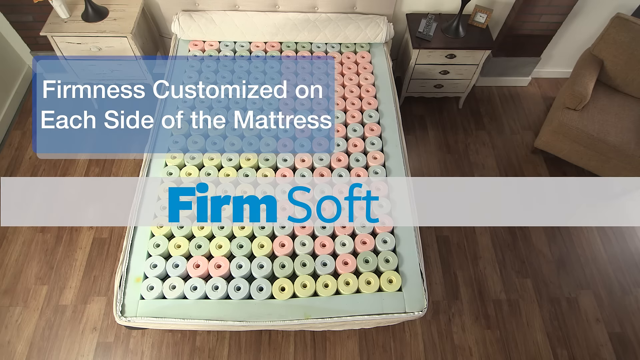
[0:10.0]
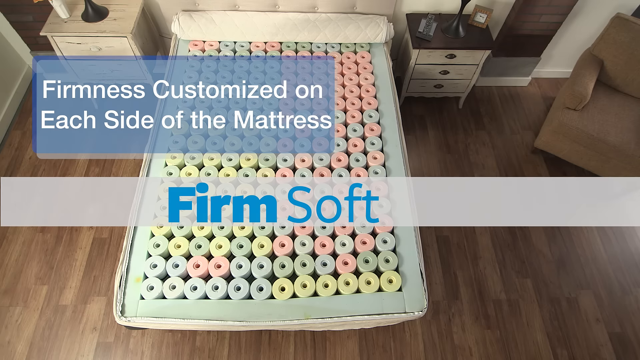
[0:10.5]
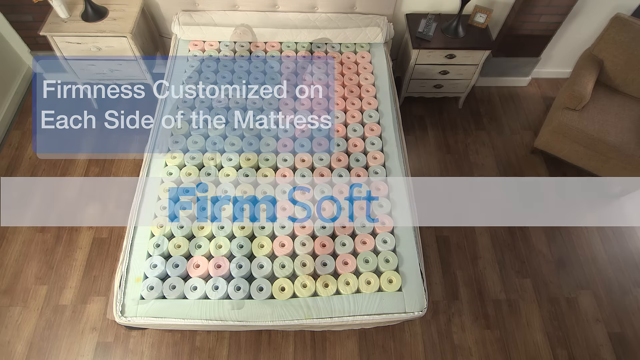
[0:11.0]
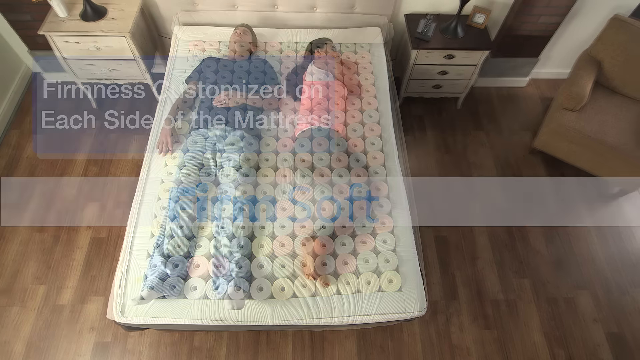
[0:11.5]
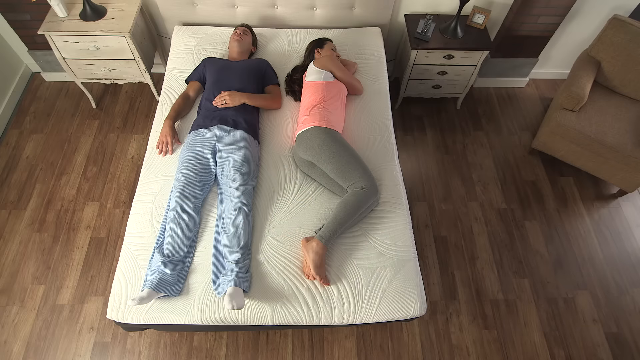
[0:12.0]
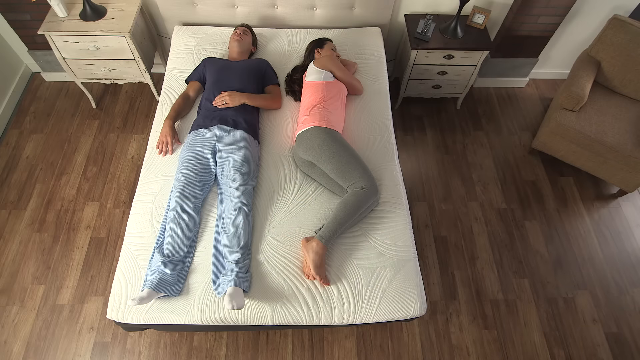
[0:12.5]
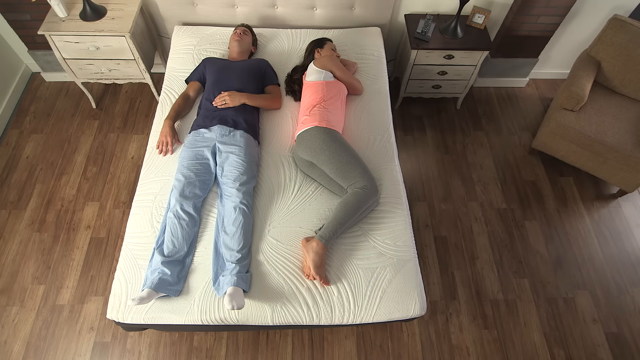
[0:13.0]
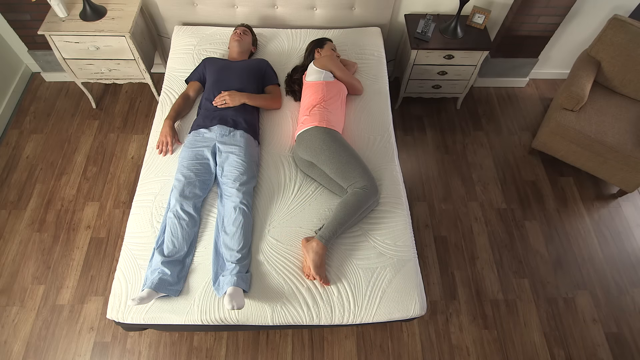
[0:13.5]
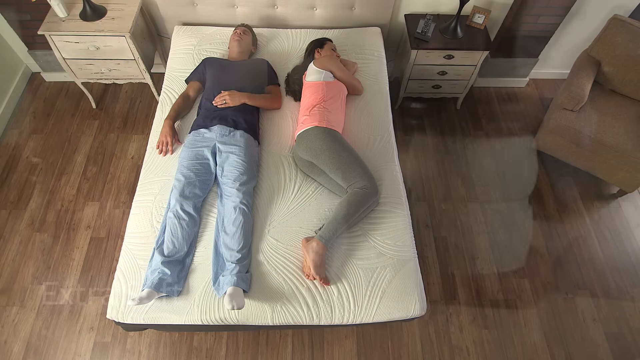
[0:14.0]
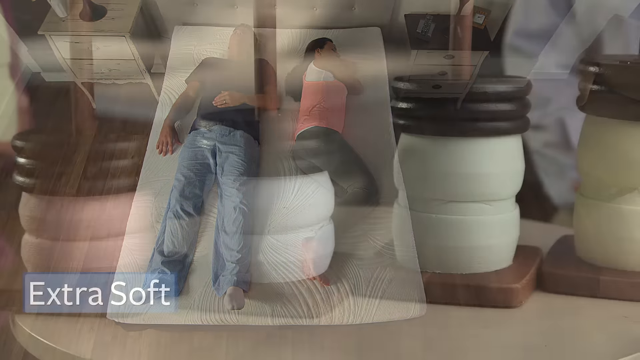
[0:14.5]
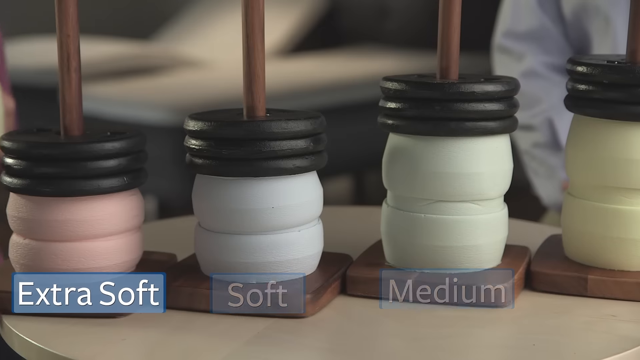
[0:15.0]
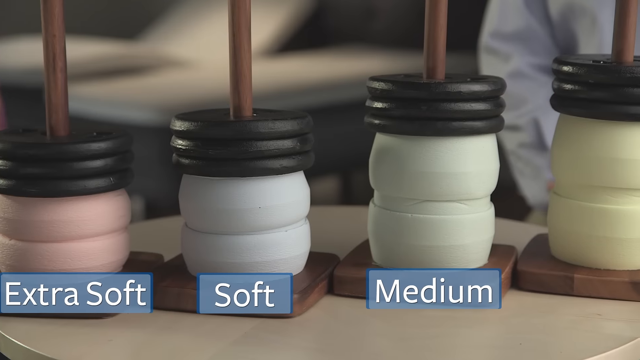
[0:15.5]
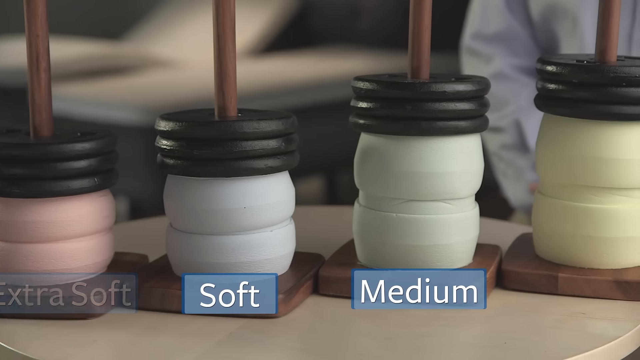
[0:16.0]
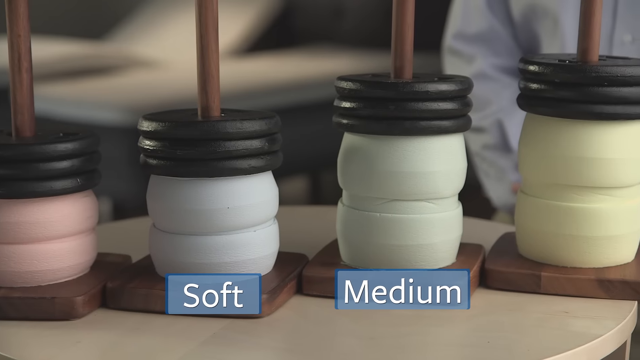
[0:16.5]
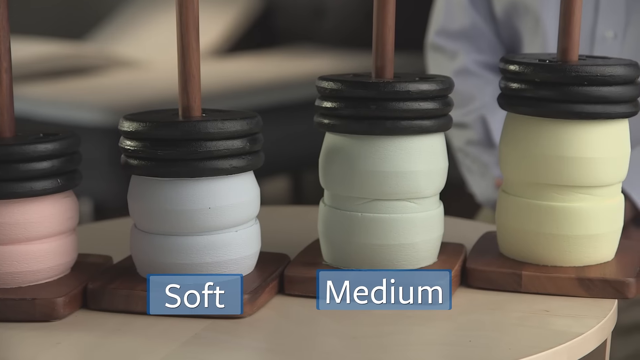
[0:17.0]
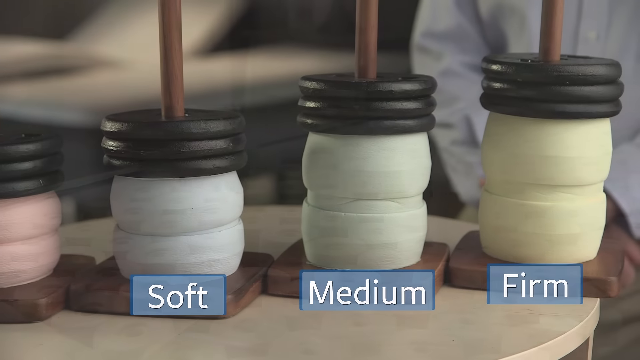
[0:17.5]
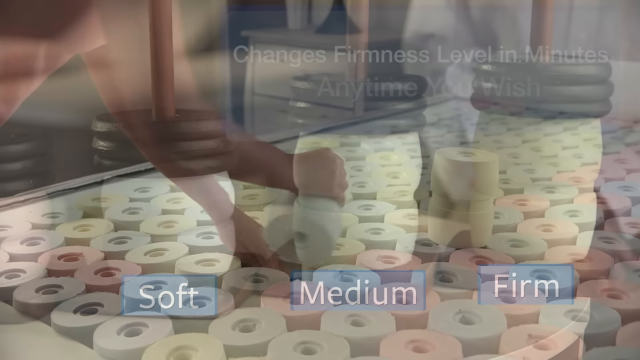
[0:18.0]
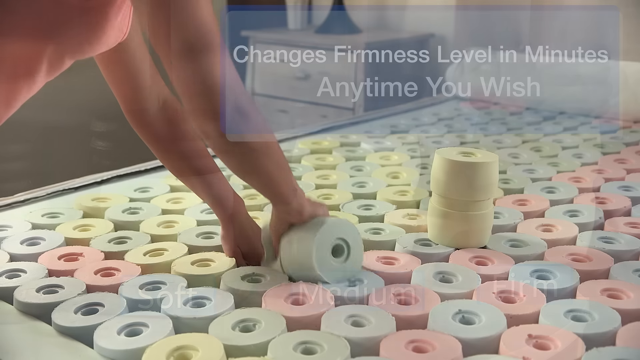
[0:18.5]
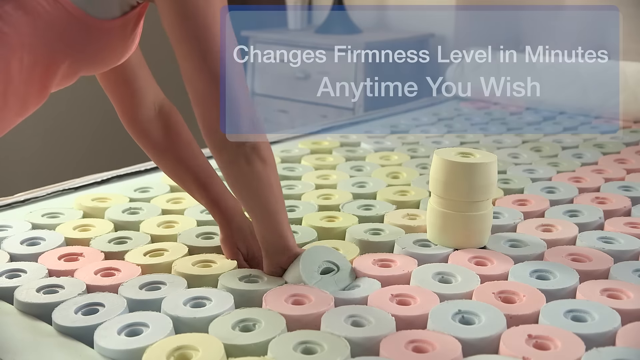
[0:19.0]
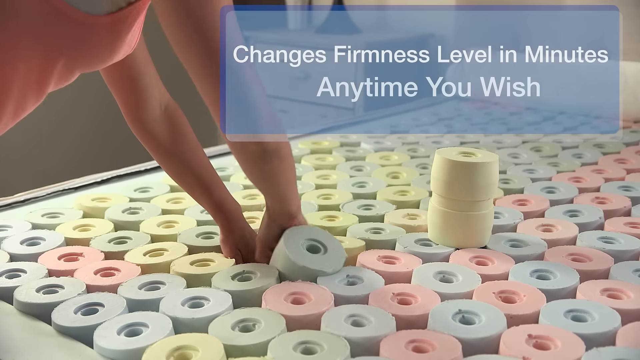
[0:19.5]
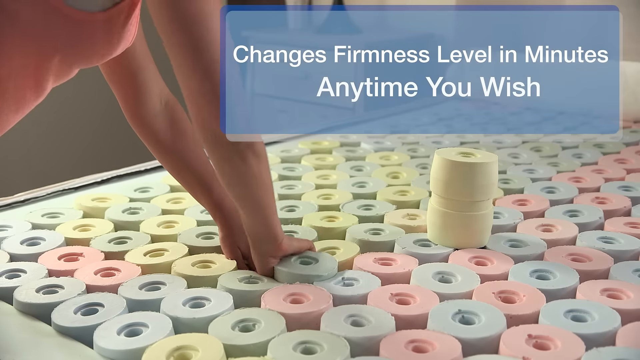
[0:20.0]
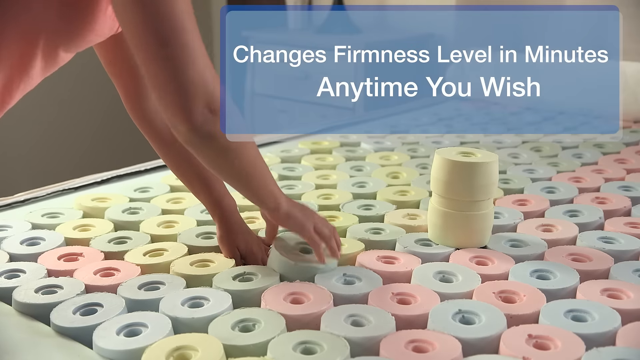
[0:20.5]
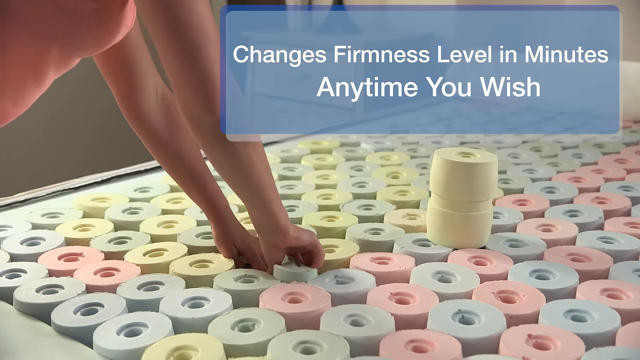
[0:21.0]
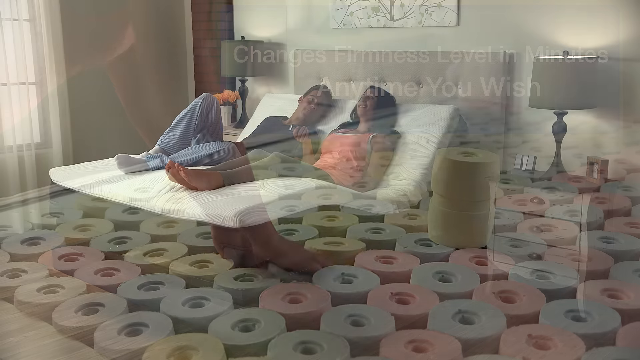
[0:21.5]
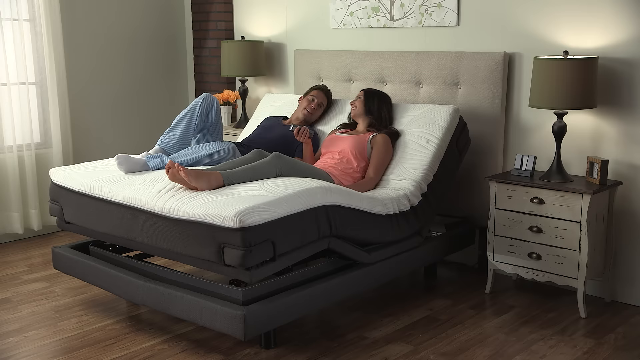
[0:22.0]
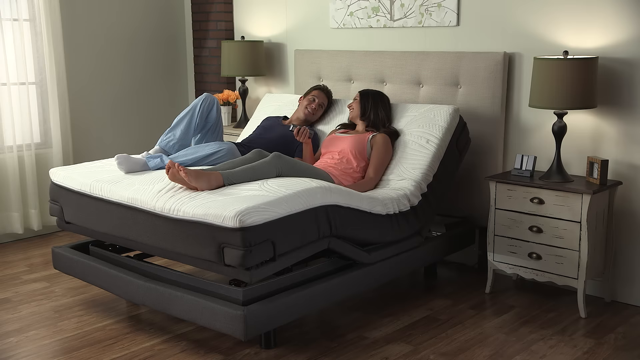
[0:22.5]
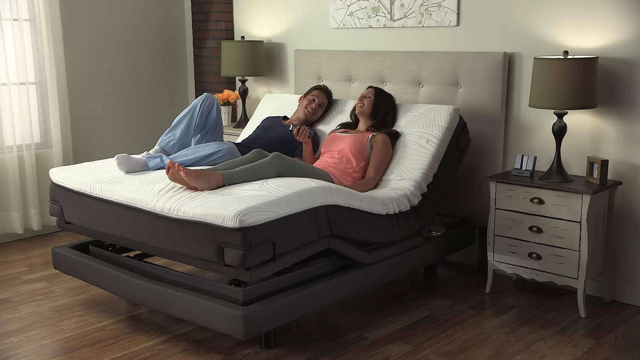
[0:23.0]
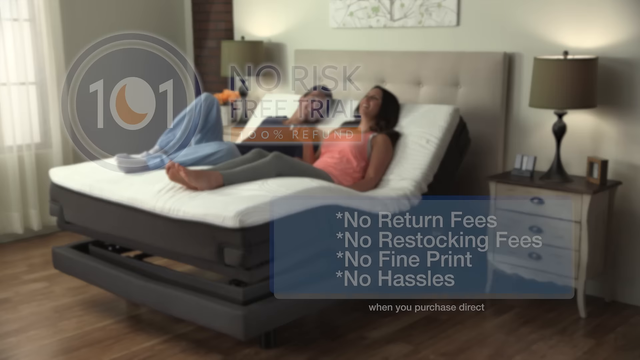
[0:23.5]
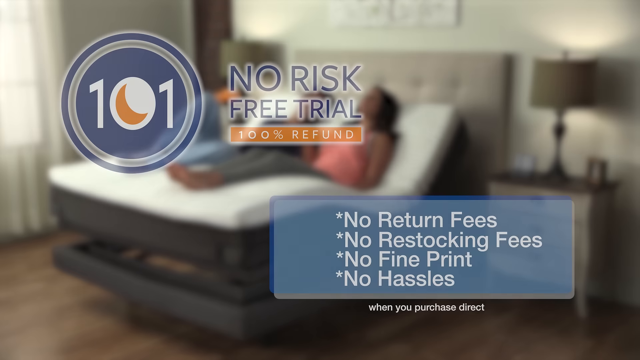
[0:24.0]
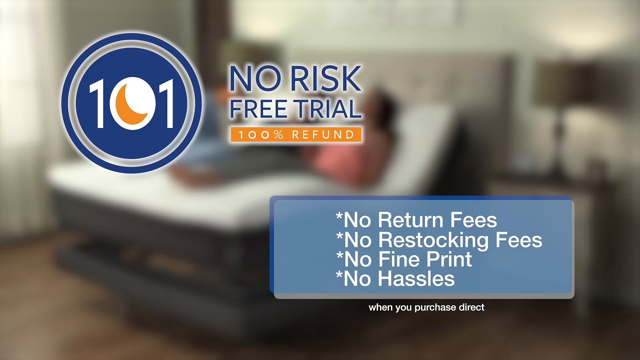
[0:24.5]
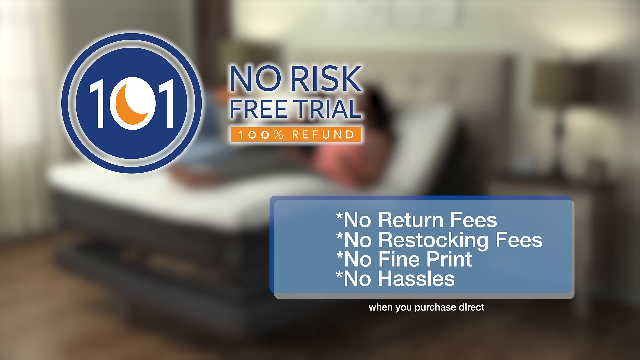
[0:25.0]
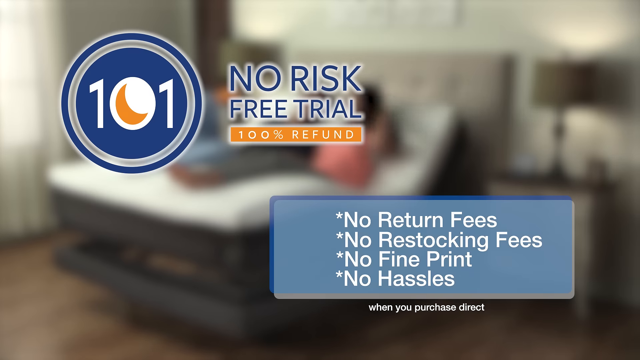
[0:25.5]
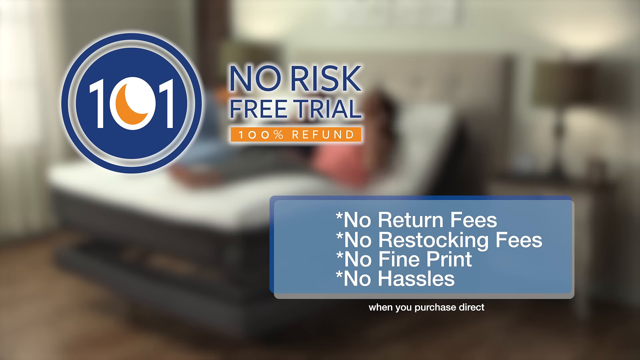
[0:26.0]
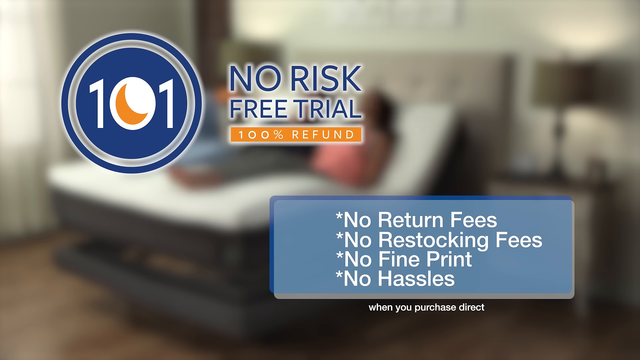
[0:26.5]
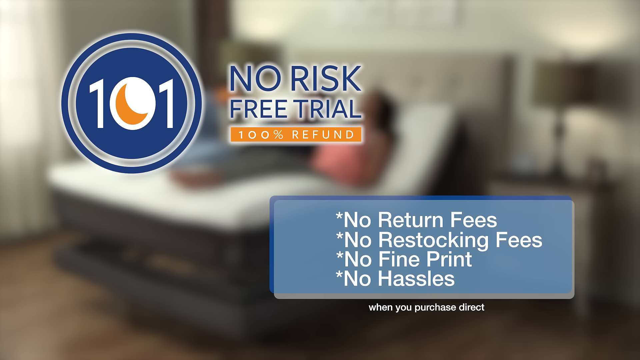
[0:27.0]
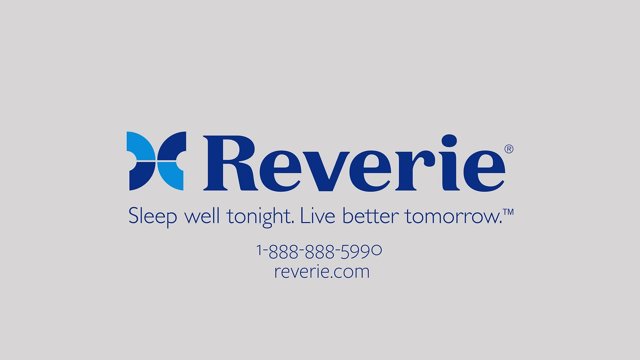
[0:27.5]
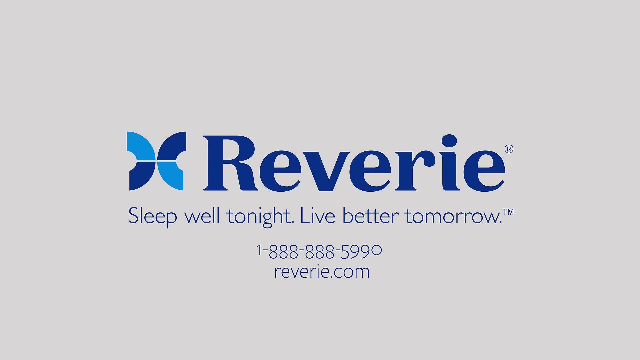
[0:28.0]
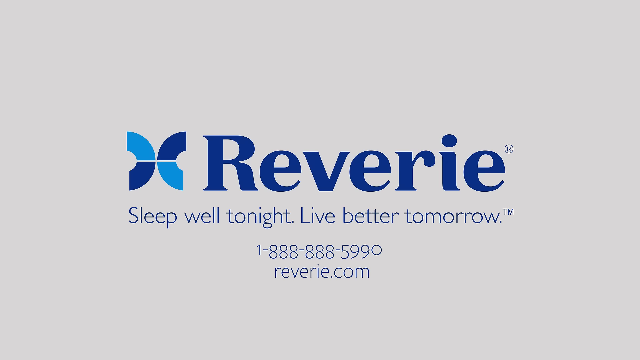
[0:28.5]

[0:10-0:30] A view from above shows the inside of the mattress under the topper, filled with cylindrical pieces shaped almost like toilet paper rolls in pastel green, blue, and pink. A blue rectangle in the top left corner reads "firmness customized on each side of the mattress," and a banner at the bottom reads "firm soft." A bedroom appears with a hardwood floor visible at the bottom. Two people are asleep on each side of the bed with no covers: on the left a man in blue pajamas lies on his back, and on the right a woman in a layered tank top and leggings lies on her side. The inner workings are shown ranging from ultra soft to firm, and text reads "you can change firmness level in minutes." The couple is then shown reclining in their bed together. An image pops up reading "no risk free trial, 100% refund," with a blue rectangle at the bottom reading "no return fee, no restock fee, no fine print, and no hassles." A white screen comes up with the Reverie logo and the text "sleep well tonight, live better tomorrow," with a phone number and a website listed underneath.